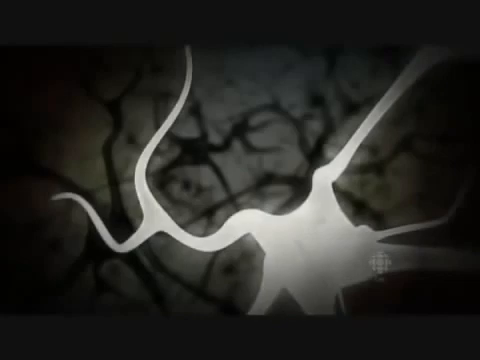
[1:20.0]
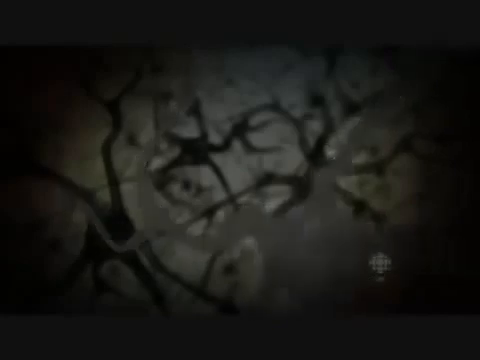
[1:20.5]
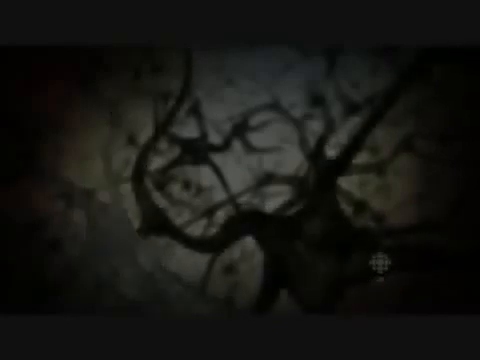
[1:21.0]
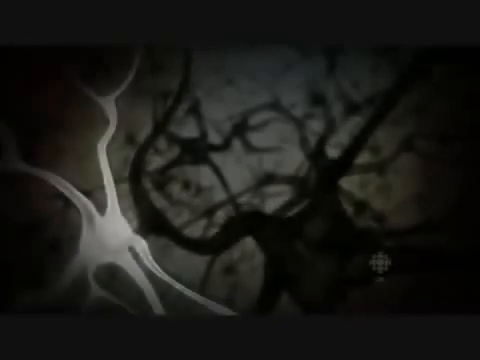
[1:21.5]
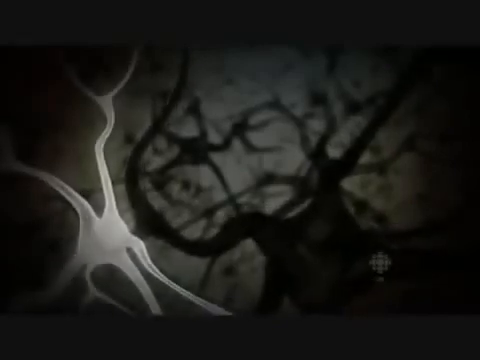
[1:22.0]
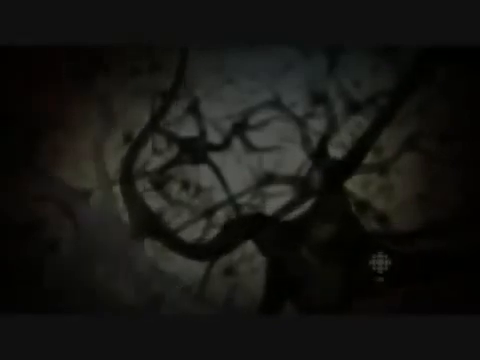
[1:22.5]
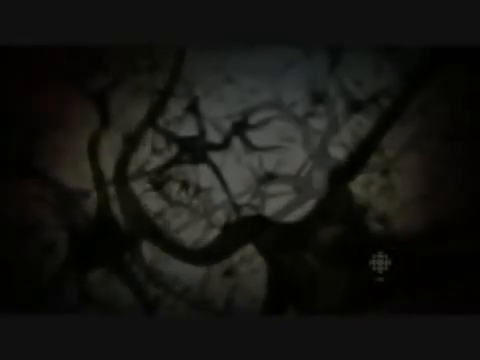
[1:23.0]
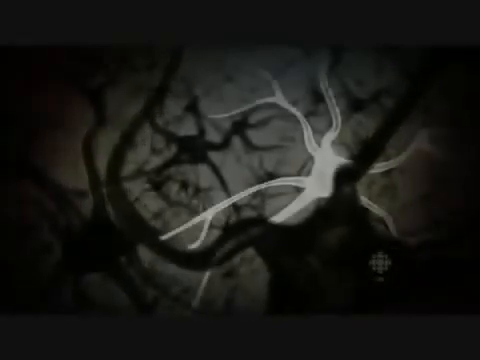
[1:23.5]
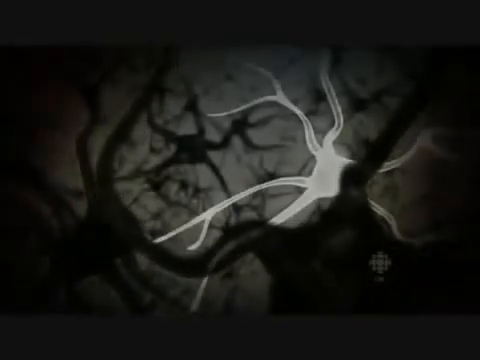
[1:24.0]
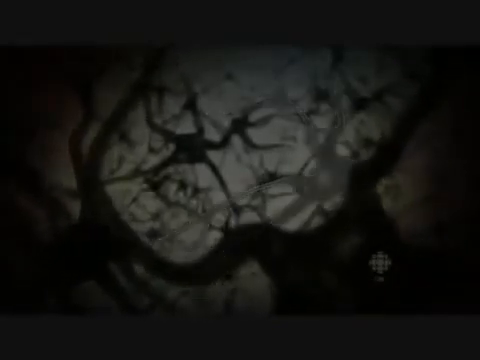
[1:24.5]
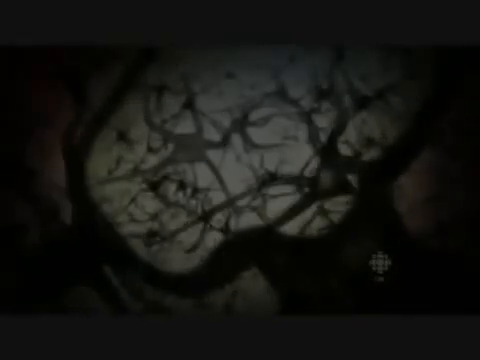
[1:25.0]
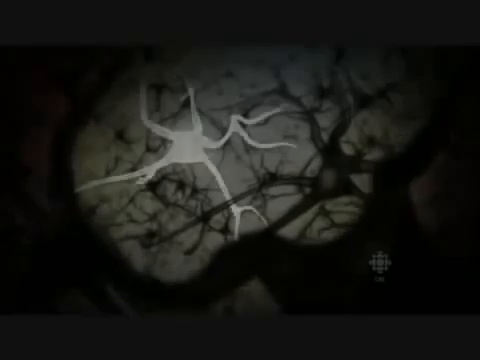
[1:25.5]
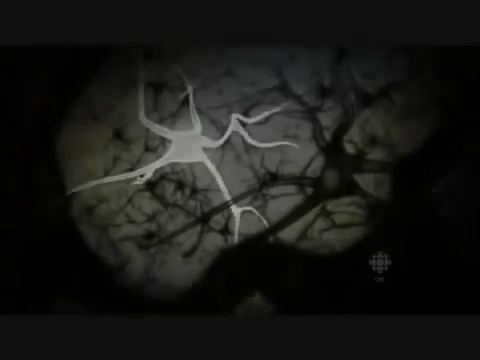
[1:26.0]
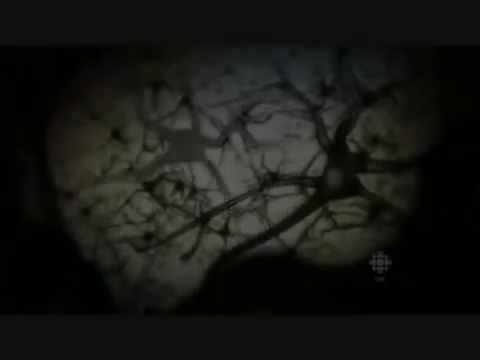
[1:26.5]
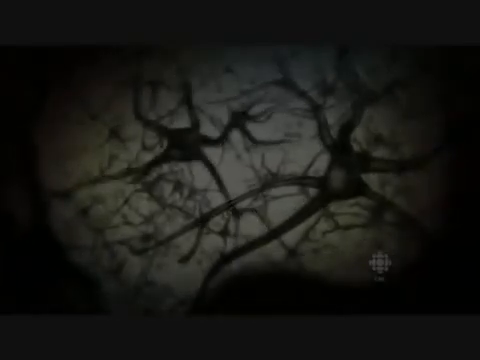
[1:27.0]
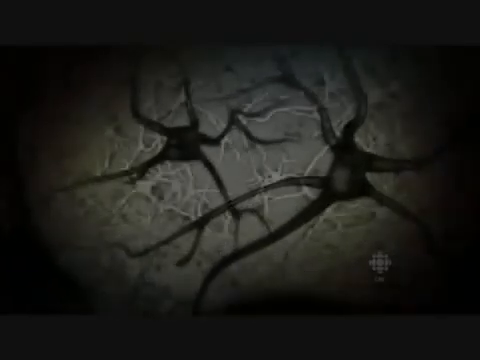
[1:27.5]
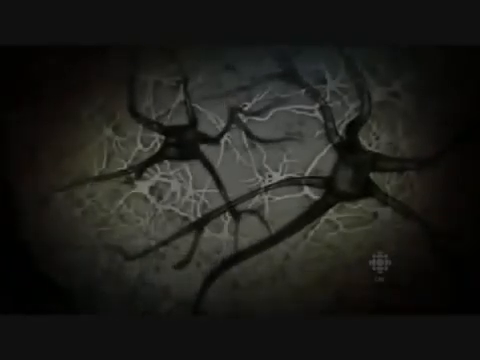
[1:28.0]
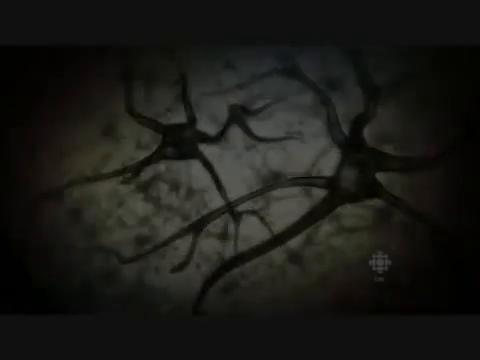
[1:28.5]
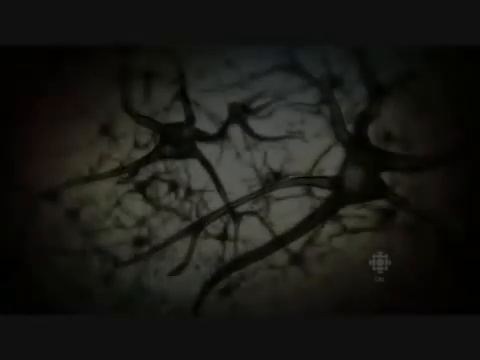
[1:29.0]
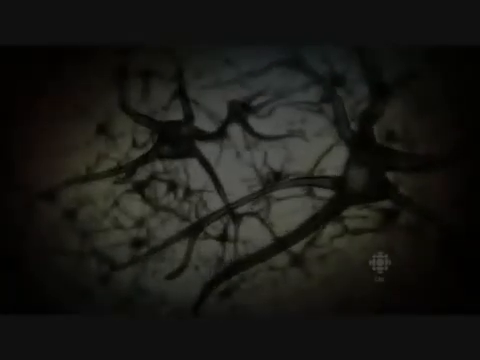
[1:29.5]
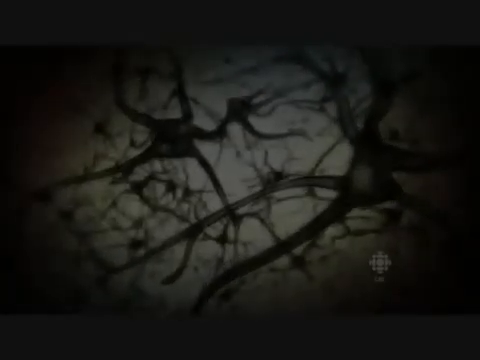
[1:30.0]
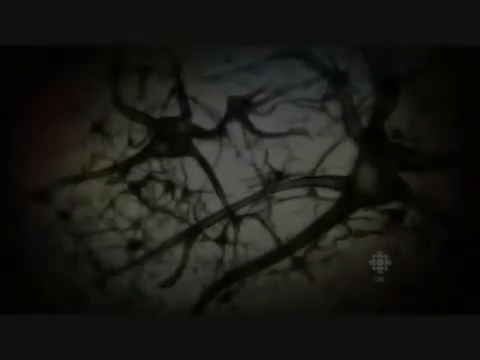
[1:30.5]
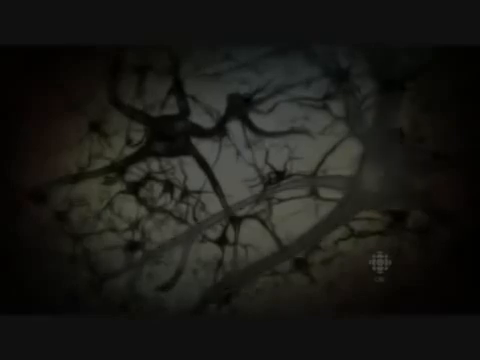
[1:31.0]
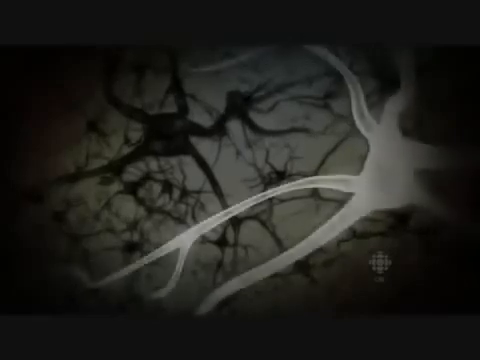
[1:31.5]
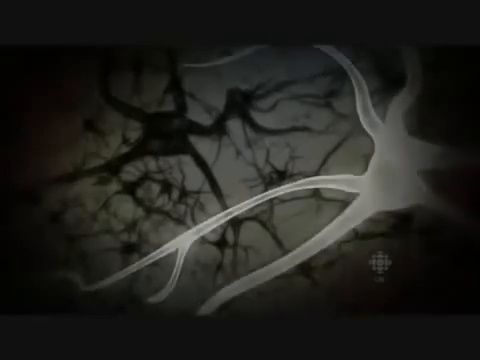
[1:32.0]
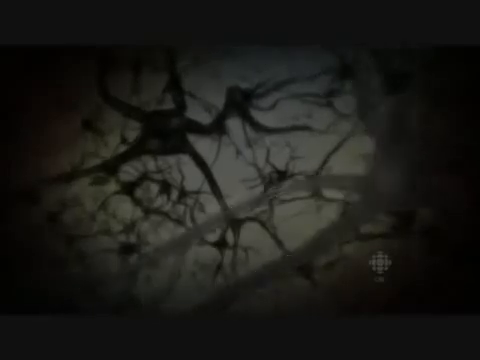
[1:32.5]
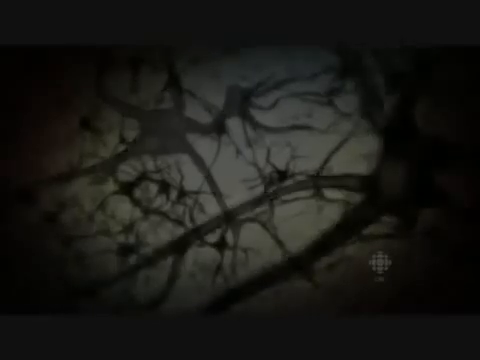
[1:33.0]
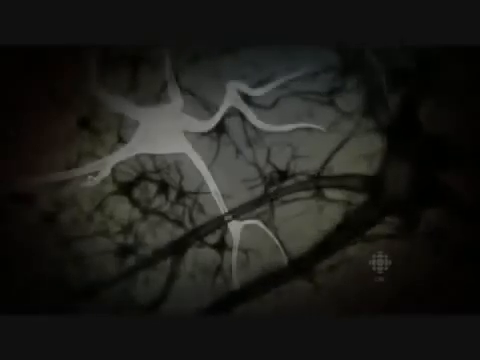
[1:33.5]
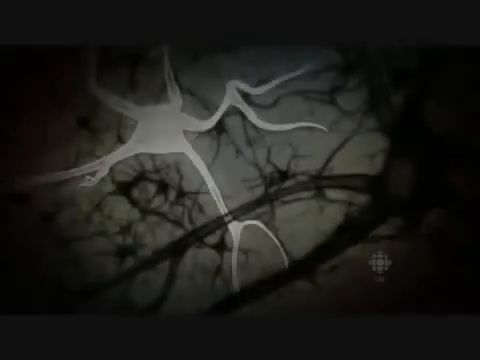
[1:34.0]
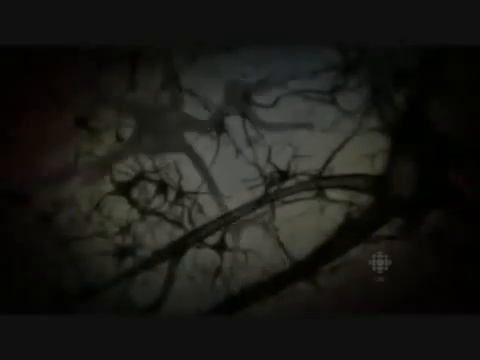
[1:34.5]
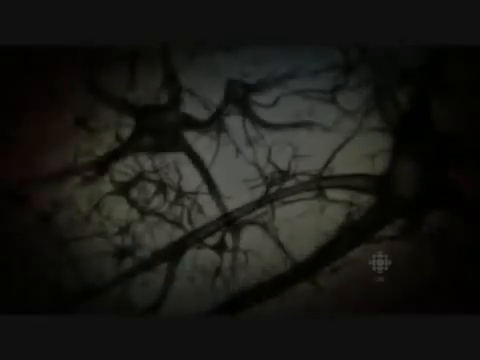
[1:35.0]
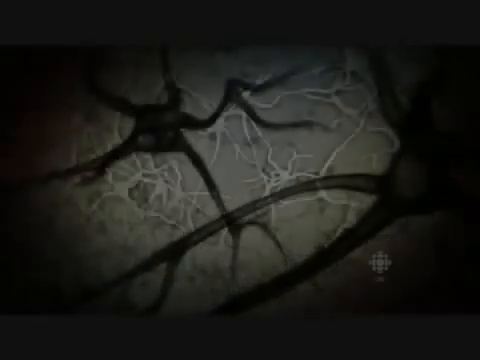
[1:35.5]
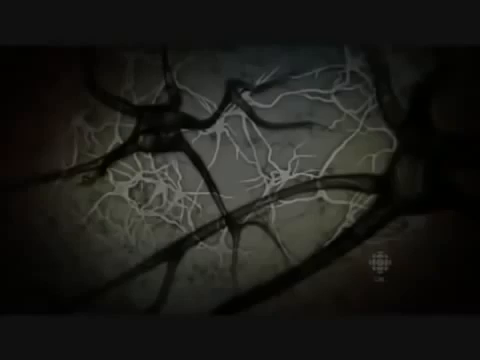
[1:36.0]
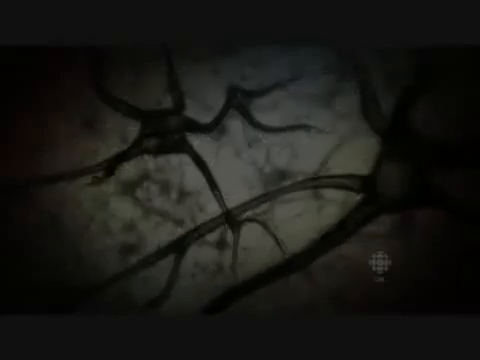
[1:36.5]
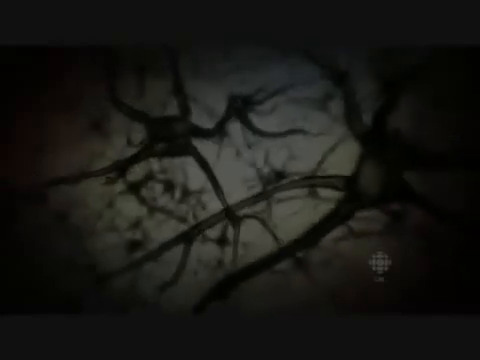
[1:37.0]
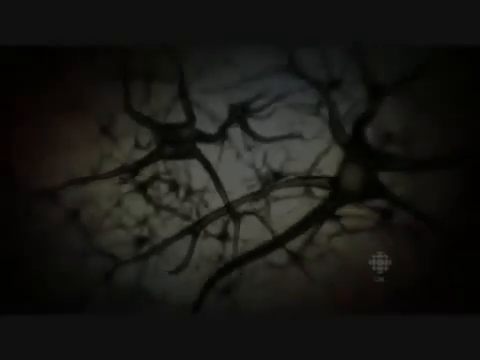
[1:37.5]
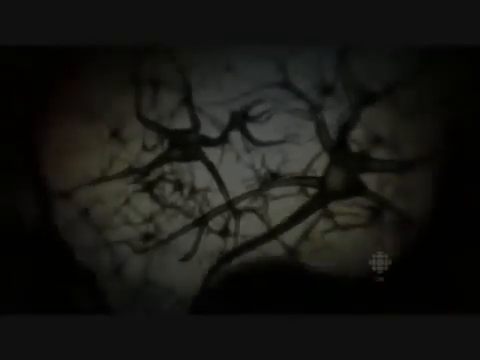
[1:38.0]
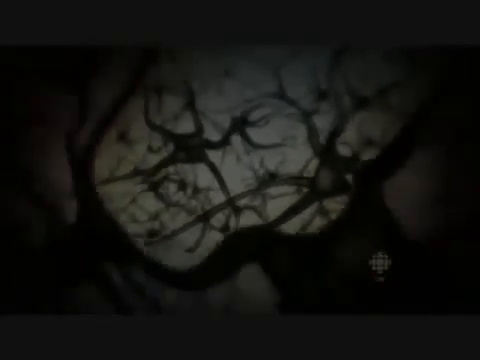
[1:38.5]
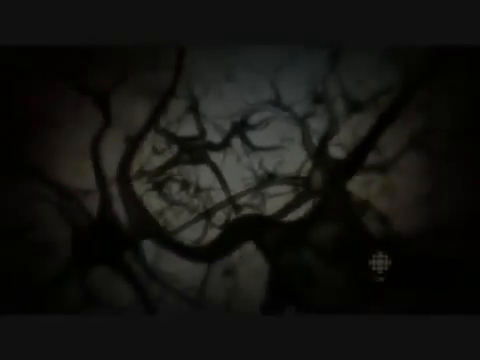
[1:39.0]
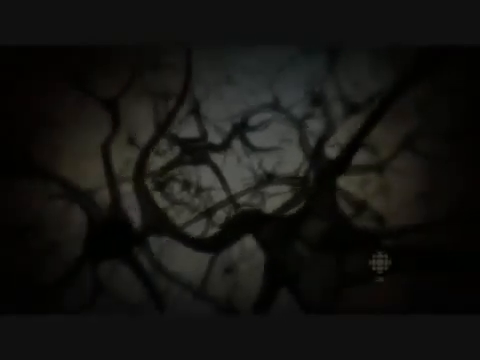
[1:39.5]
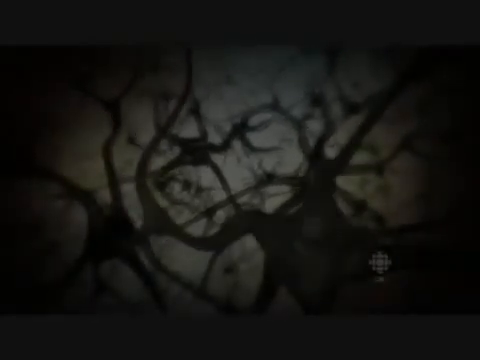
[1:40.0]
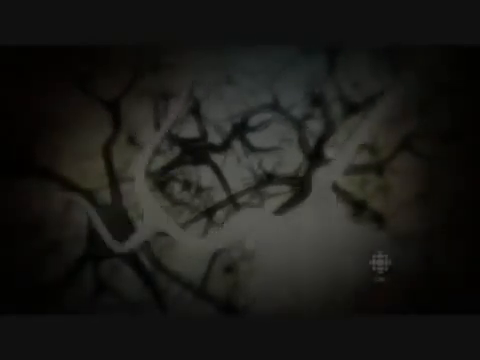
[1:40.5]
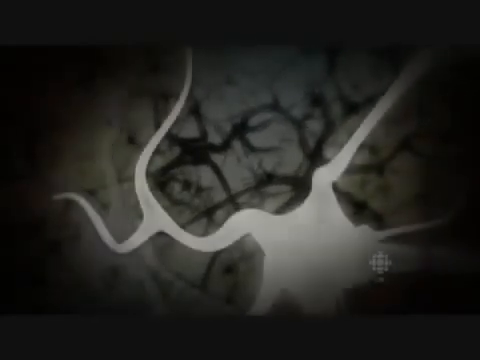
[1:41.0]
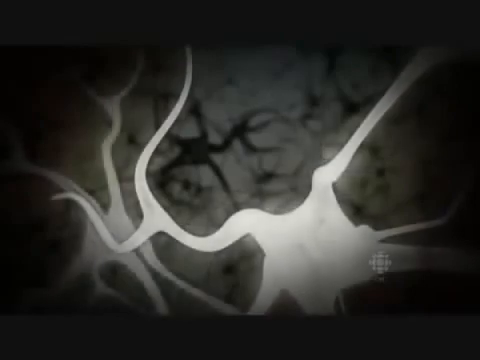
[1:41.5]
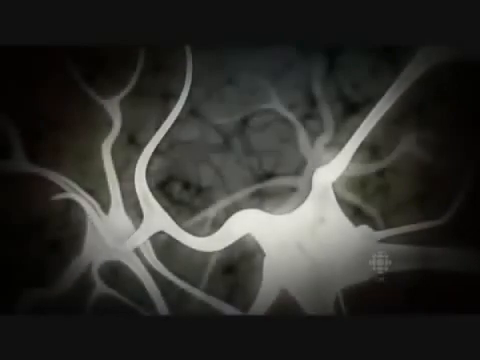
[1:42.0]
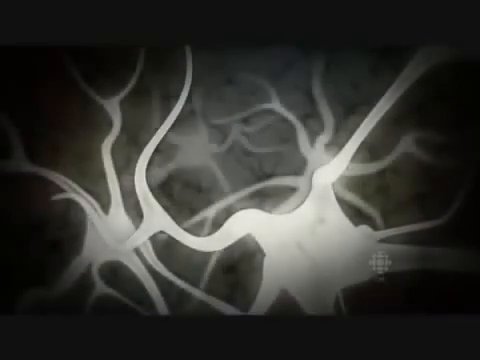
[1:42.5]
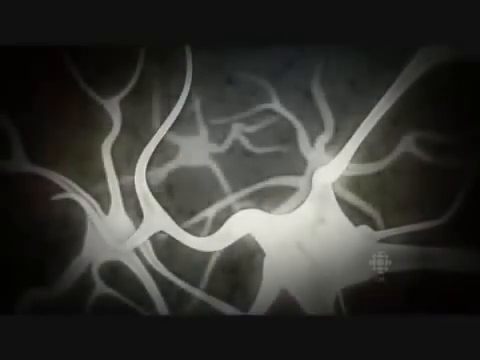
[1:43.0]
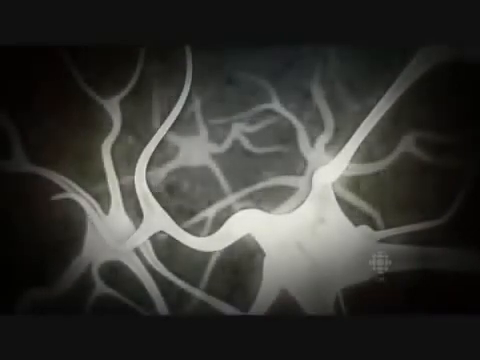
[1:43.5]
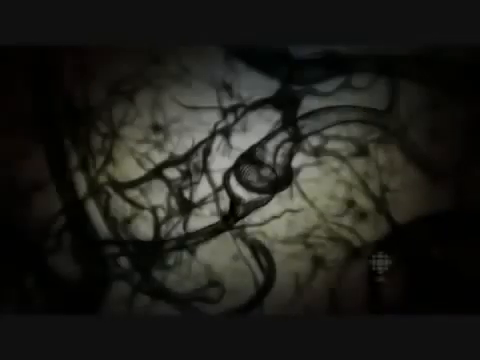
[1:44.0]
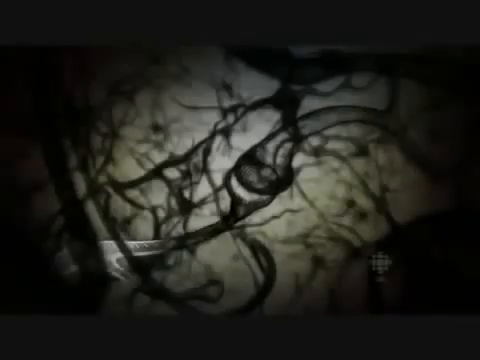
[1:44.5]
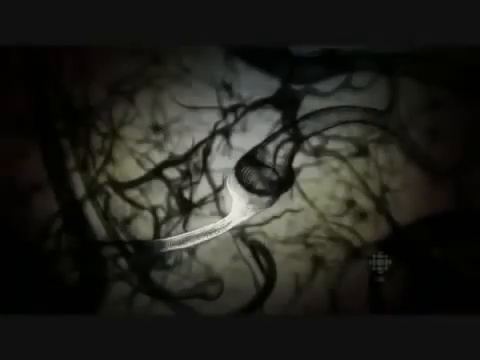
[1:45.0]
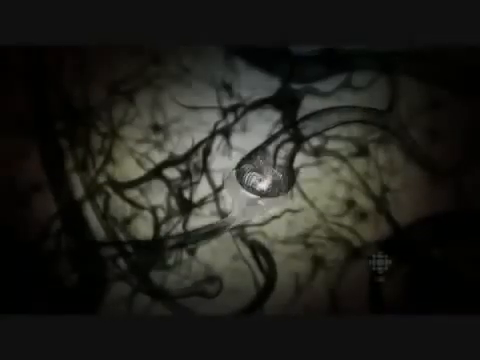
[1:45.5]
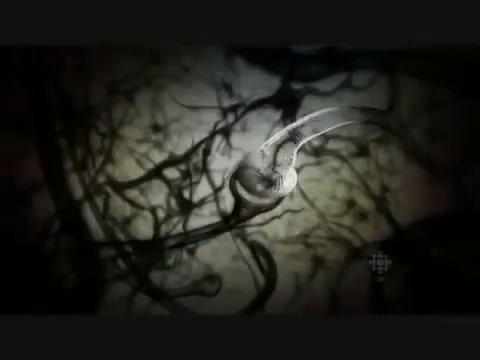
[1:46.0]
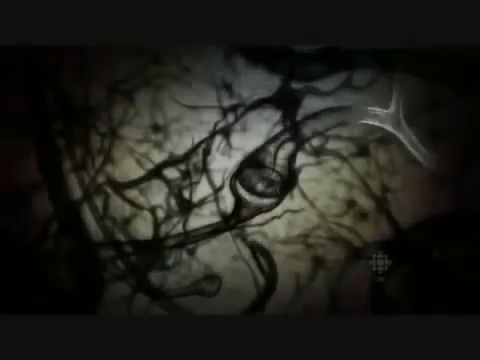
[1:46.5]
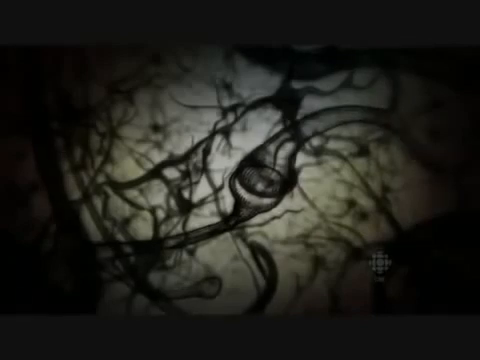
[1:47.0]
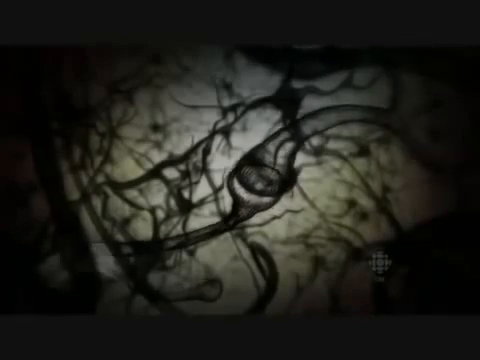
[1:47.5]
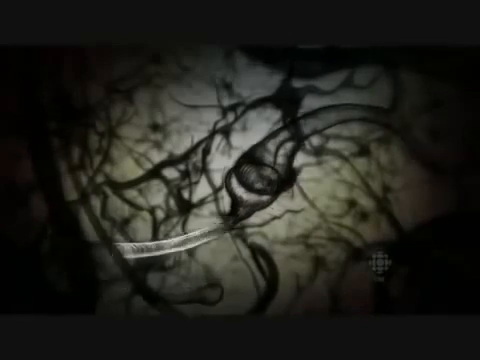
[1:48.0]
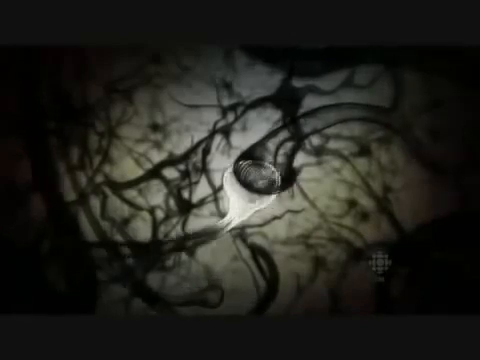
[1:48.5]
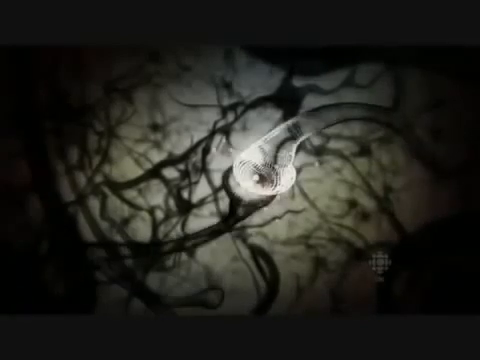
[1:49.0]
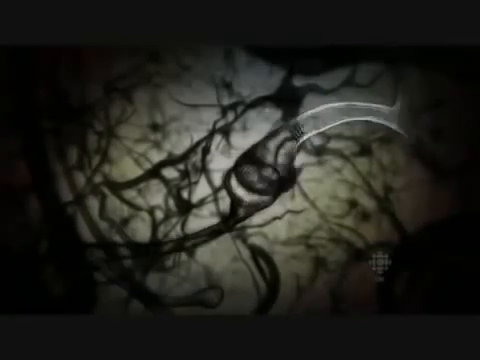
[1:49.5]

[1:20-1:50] The neuron in front on the right side becomes very bright and white, then black. A neuron on the left side becomes white and then black. A neuron in the distance to the right side becomes white and then black, and another neuron in the background on the left side does the same. A whole bunch of neurons in the distance become white and then black. A neuron in front on the right side becomes white and black, another on the left side does the same, and then a lot of neurons in the far distance become white and black. The view zooms out, showing dark neurons in front that glow white, with all the neurons in the background growing white. The scene changes to what looks like an up-close view of neurons connecting together, seemingly transmitting information. A neuron on the left side becomes very white, and it is connected to another neuron on the right side, which then becomes white.